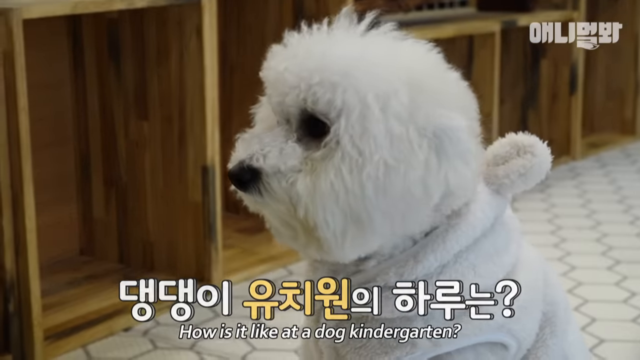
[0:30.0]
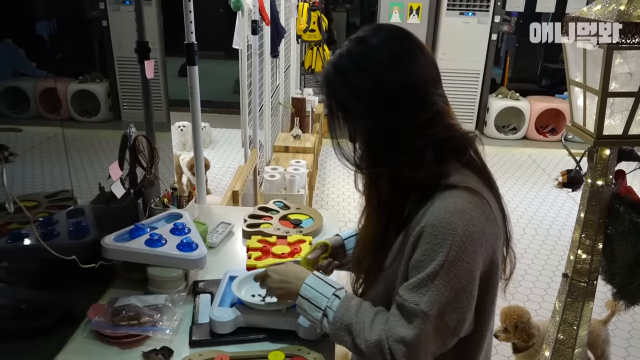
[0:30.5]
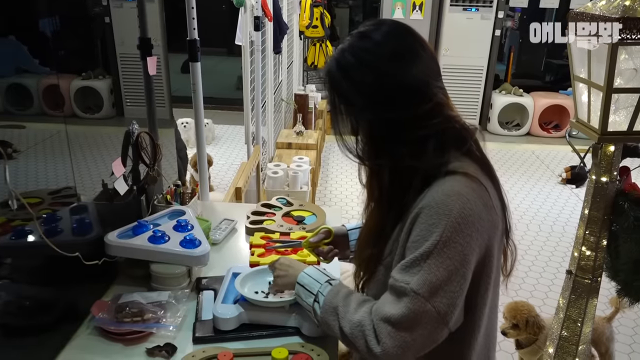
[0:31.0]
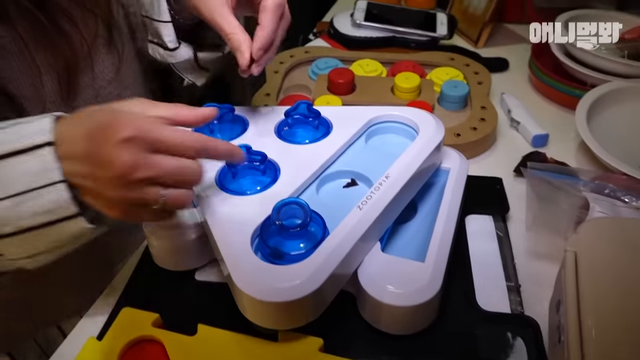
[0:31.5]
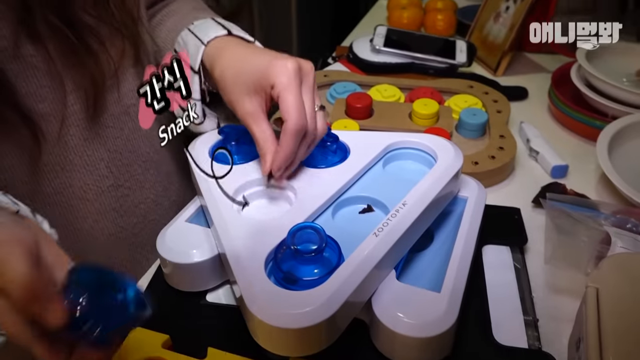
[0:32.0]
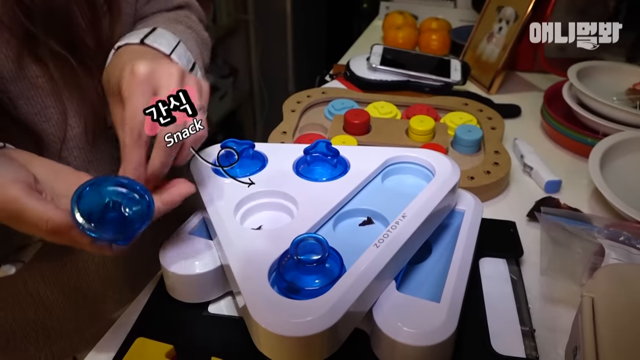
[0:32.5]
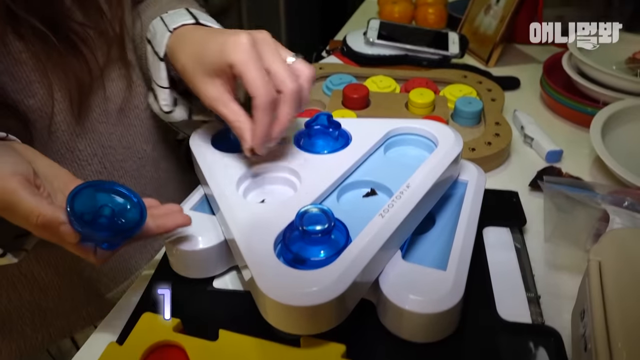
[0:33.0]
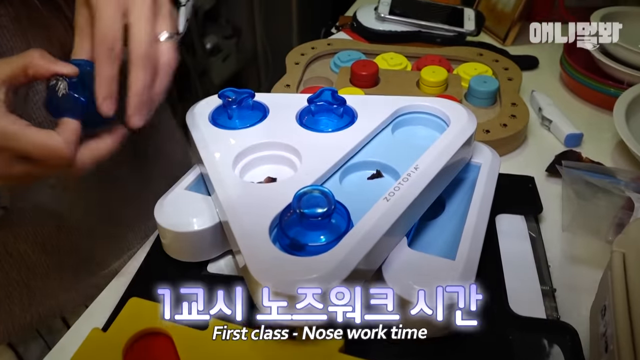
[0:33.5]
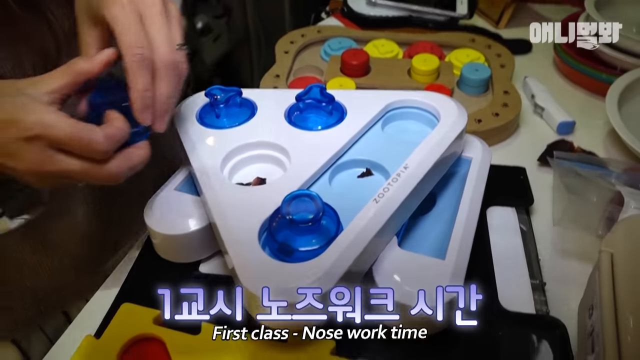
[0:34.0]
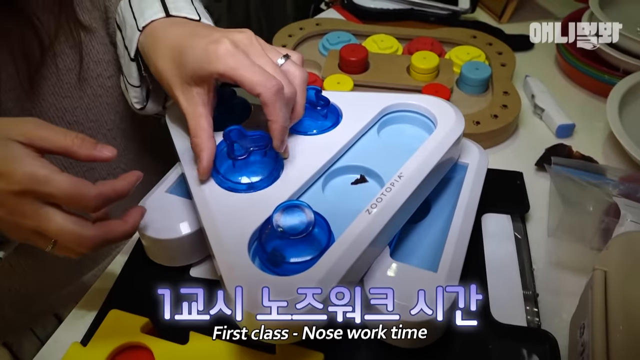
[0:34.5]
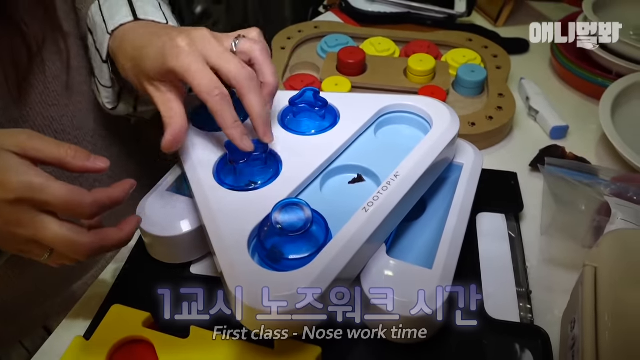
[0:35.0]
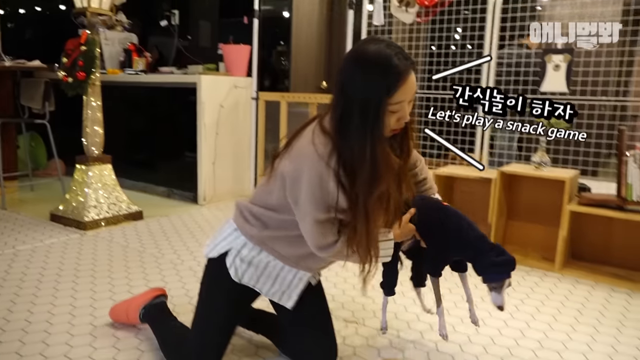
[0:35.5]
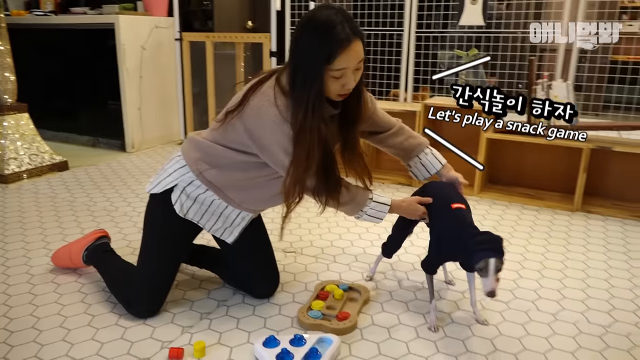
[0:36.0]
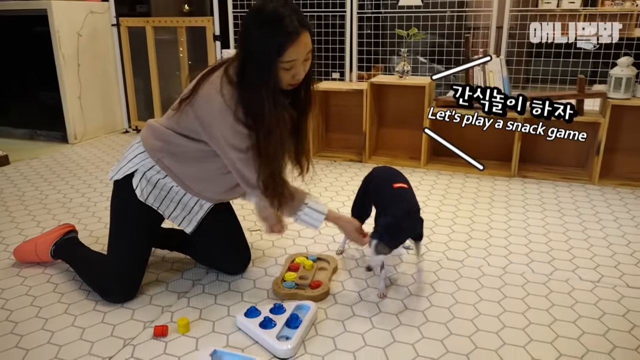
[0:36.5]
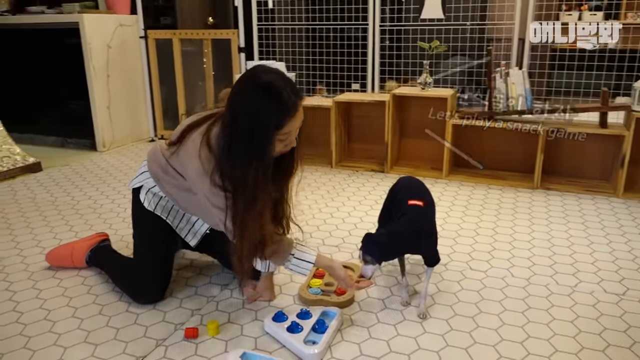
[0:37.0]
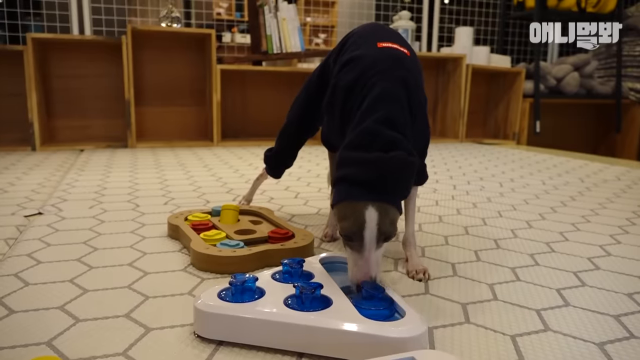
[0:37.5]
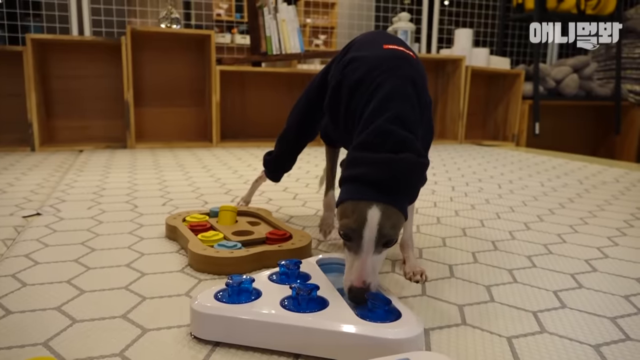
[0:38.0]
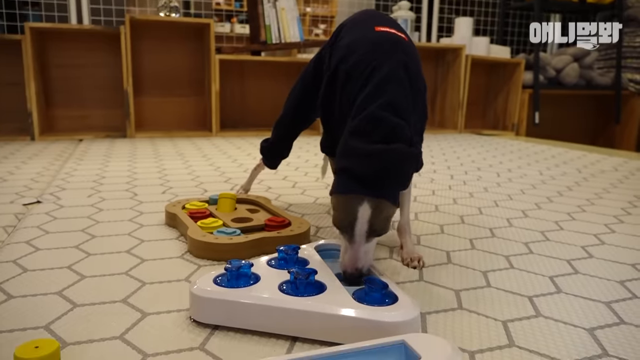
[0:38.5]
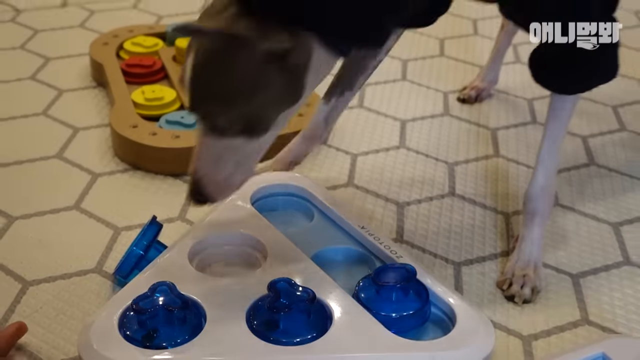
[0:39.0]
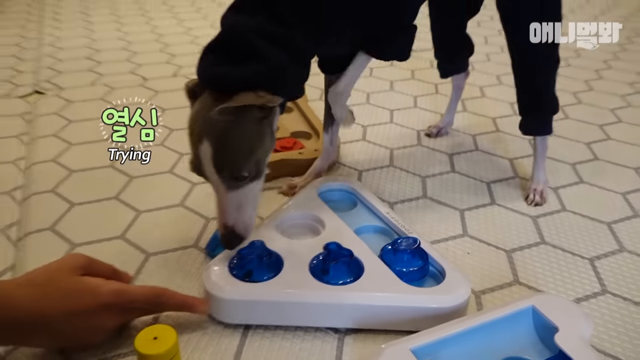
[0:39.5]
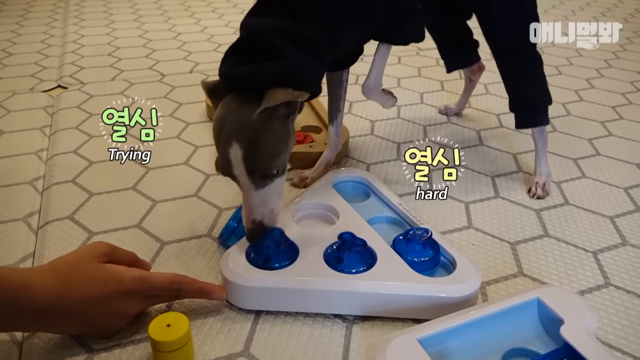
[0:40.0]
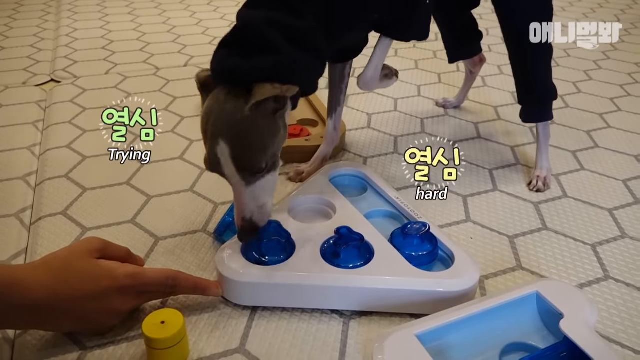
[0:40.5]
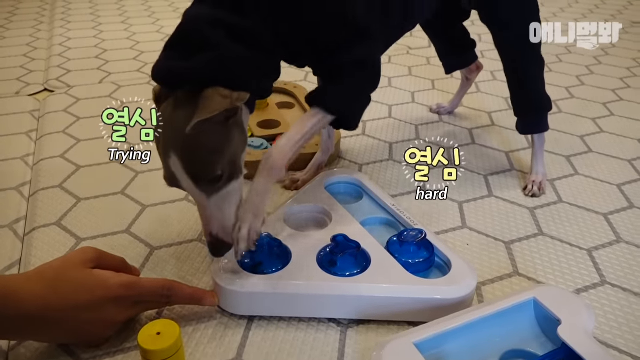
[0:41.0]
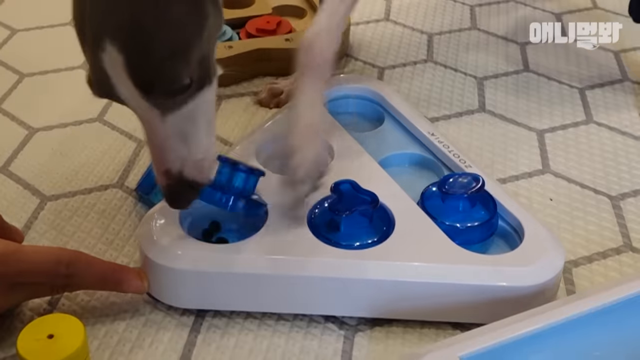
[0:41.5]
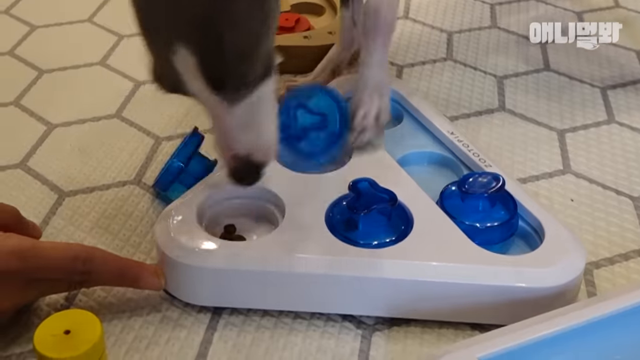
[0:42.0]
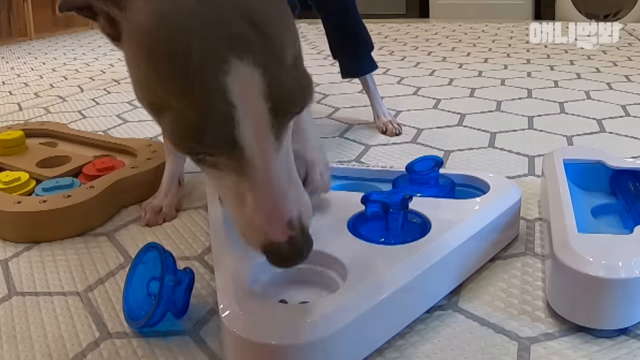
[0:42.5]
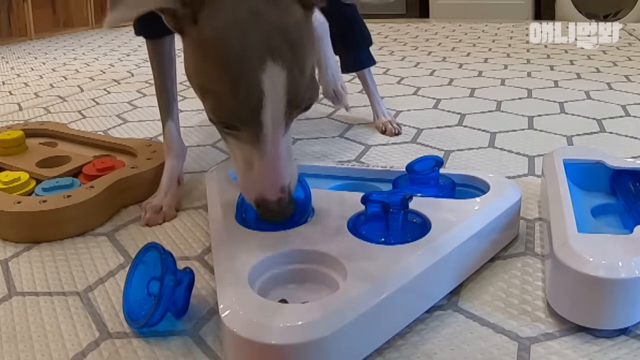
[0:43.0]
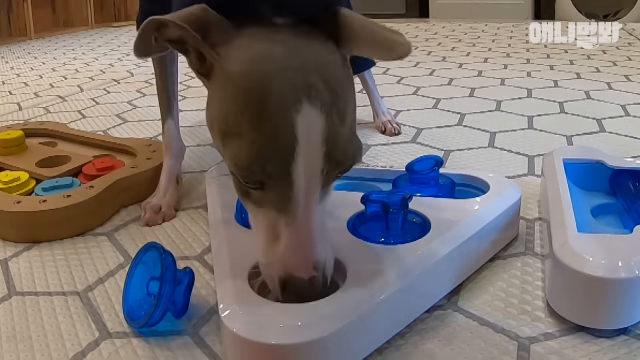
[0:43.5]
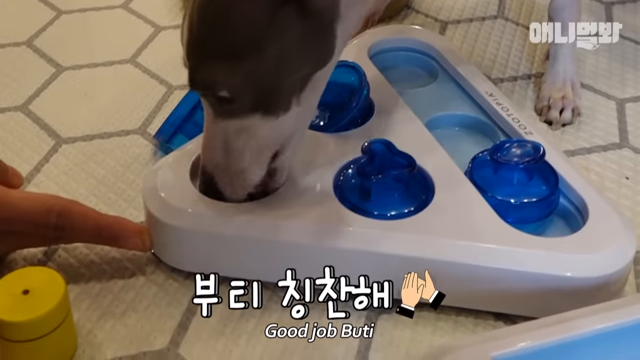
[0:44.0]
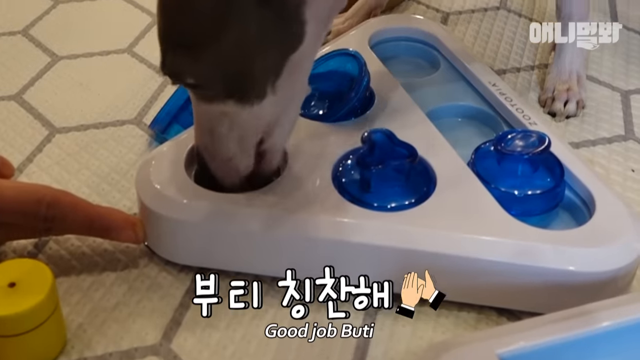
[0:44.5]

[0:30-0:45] A shot of a white fluffy dog is followed by a woman playing with some kind of dog toys: she arranges little blue jelly-like spheres or domes in a white triangle. A dog knocks over the domes to try to find a treat underneath. It is a skinny white and brown dog that appears to be wearing a black sweater. Other dog toys are on the floor next to it. The teacher wears some kind of gray sweater, what looks like a wedding band, and pink Crocs.